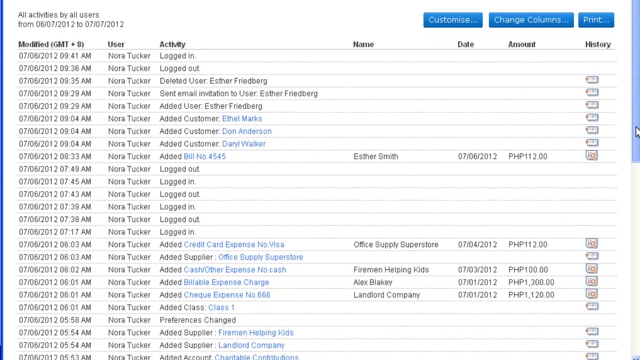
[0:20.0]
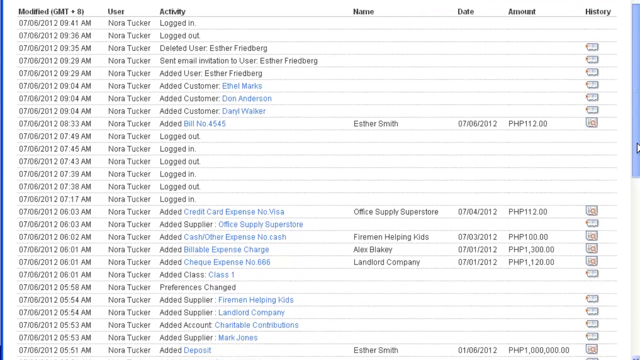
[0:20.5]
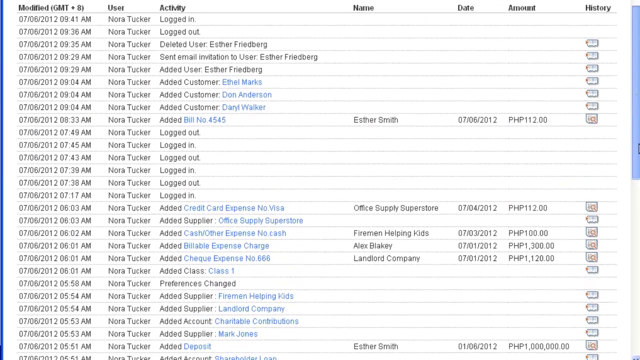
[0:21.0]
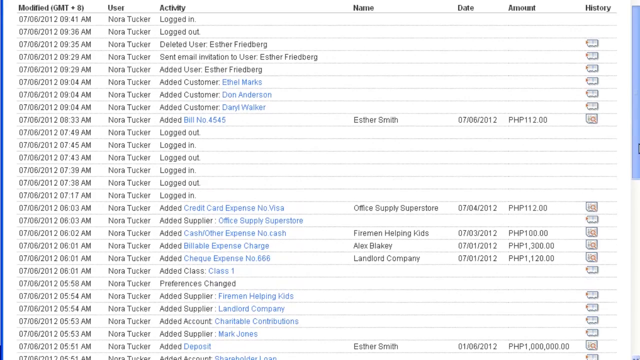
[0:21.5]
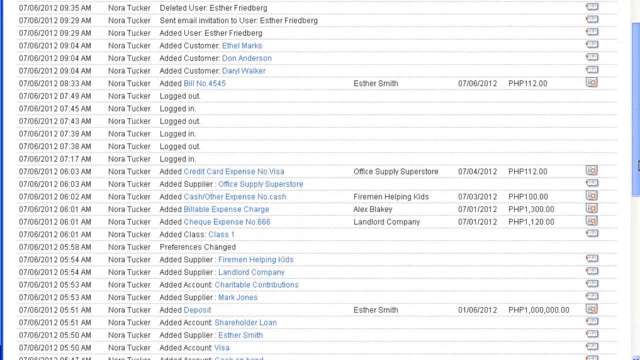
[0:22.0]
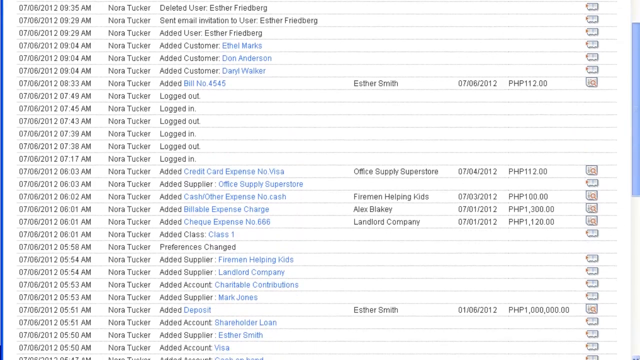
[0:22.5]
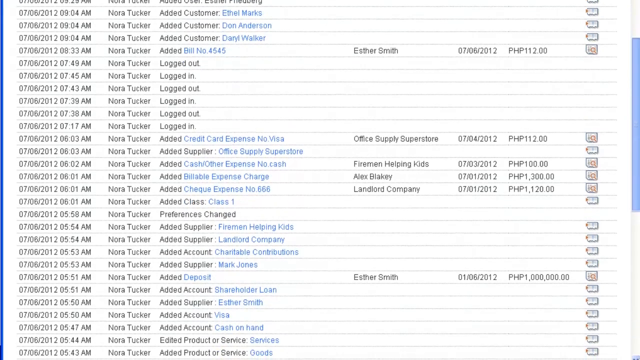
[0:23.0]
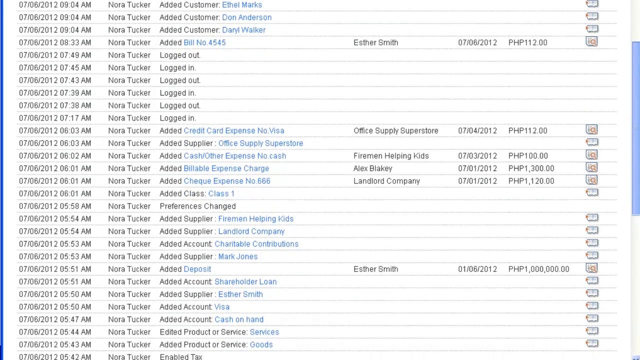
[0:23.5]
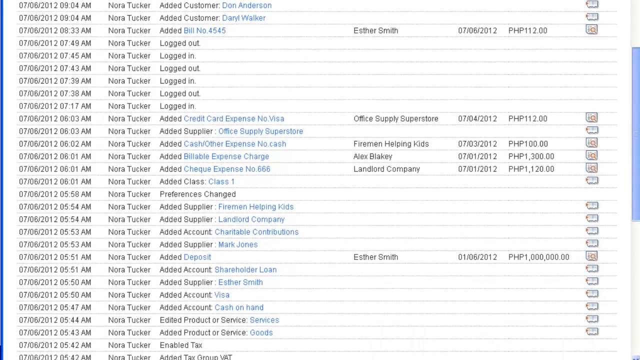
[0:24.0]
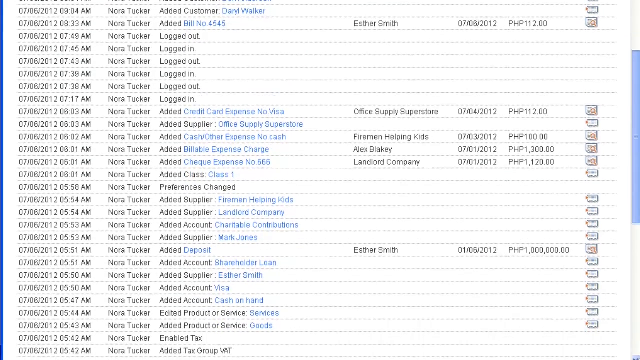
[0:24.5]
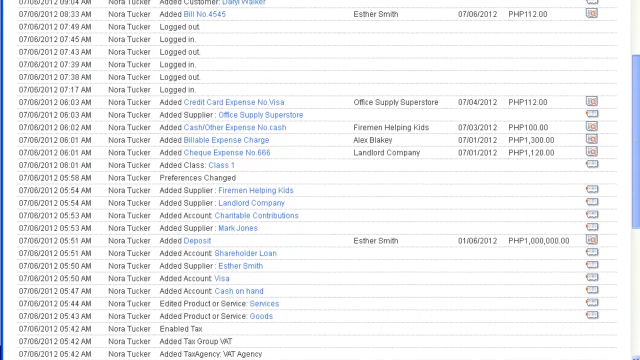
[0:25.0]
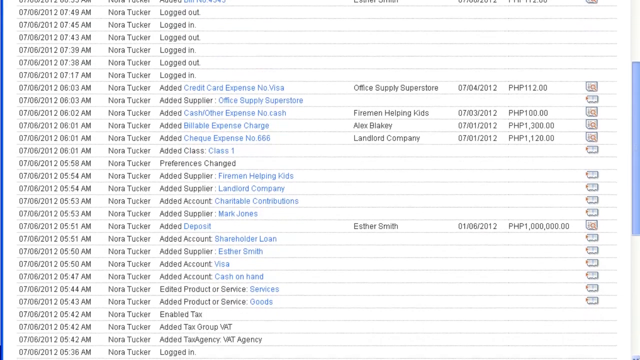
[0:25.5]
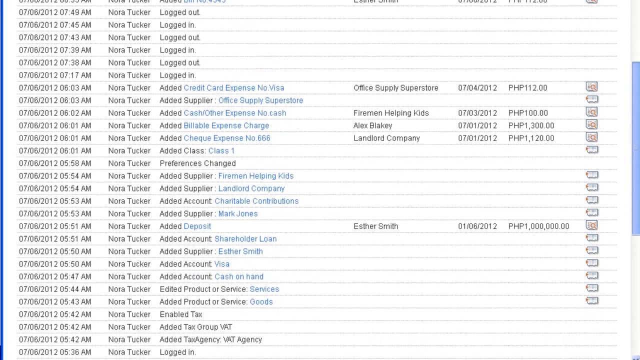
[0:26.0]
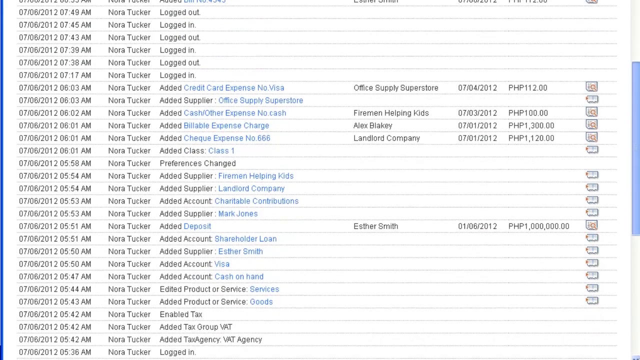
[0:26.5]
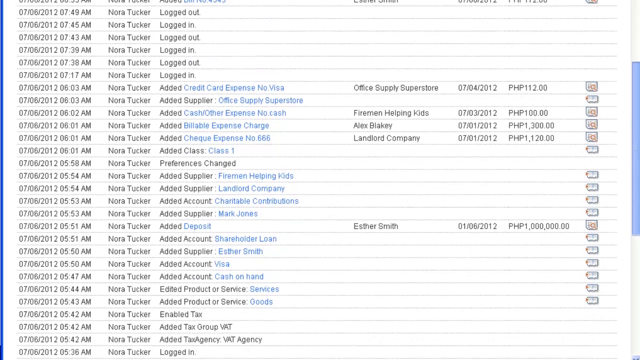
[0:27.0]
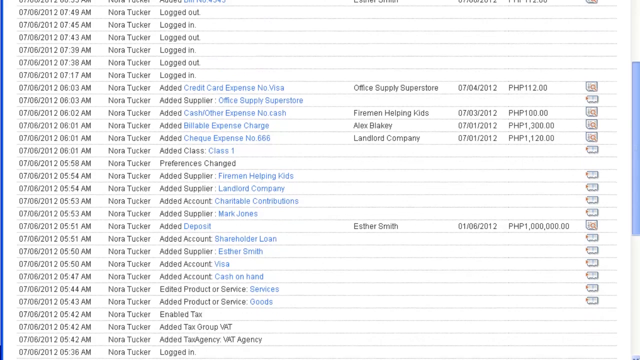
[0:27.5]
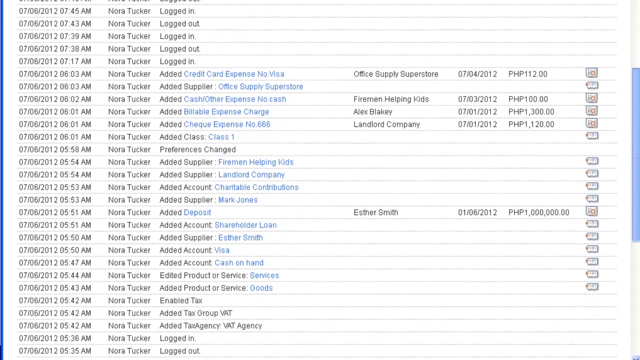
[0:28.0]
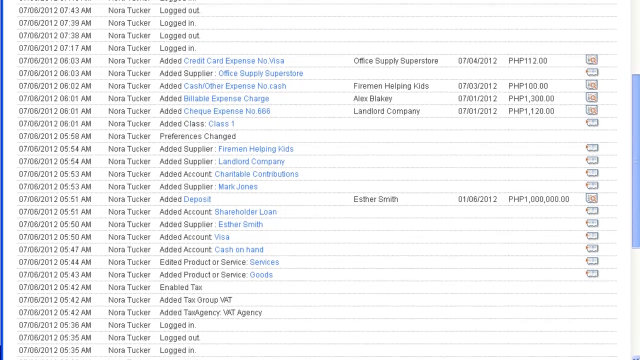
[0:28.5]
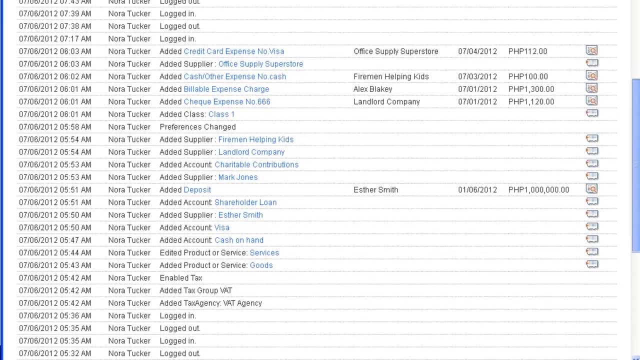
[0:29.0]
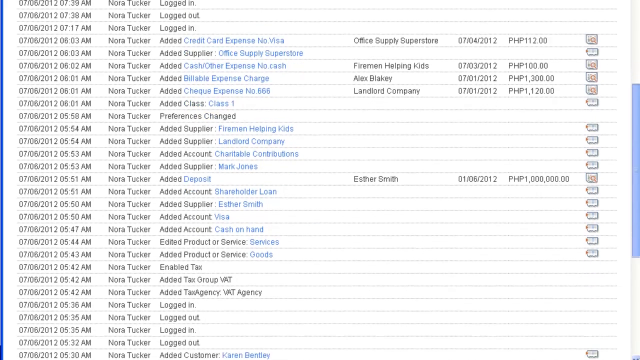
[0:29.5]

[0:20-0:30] The page keeps scrolling down through a list that appears to be sample material rather than real people's information, with the same name, Nora Tucker, repeated. The entries include actions such as "logged in", "logged out", "deleted user", "added customer", "added user", "added credit card expense", "added supplier" and "added cash other expense", along with names, dates and amounts. The list shows the activity a staff member is doing, with times and dates.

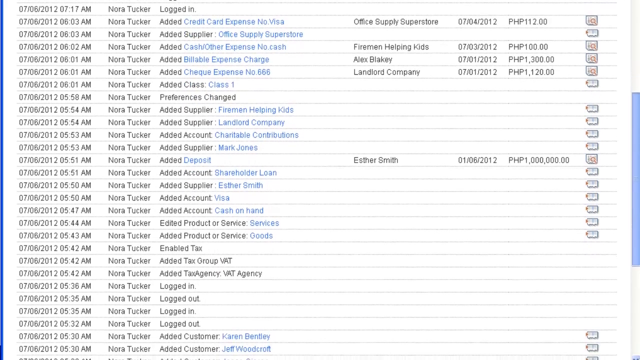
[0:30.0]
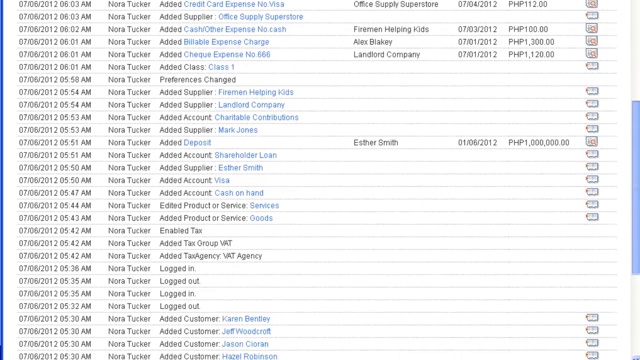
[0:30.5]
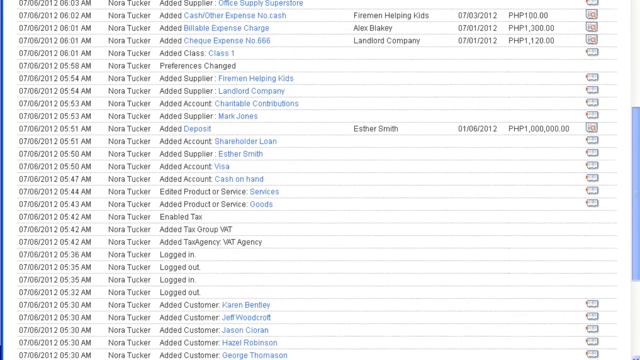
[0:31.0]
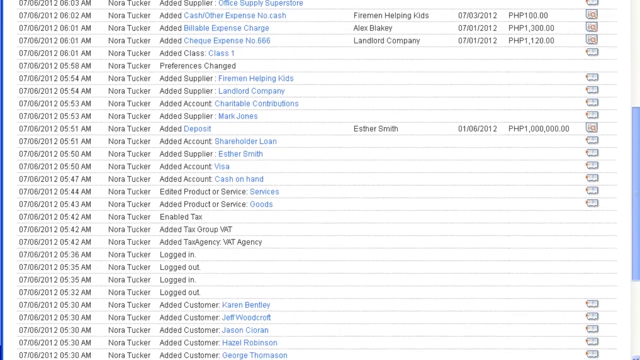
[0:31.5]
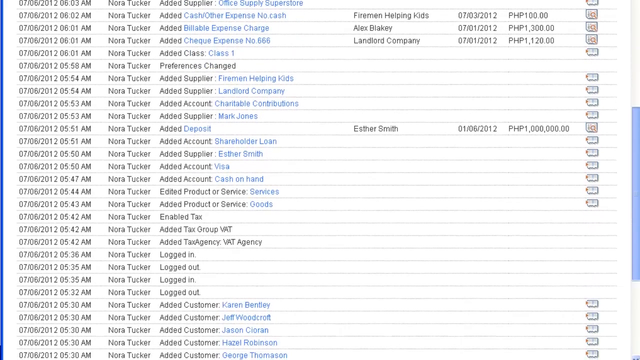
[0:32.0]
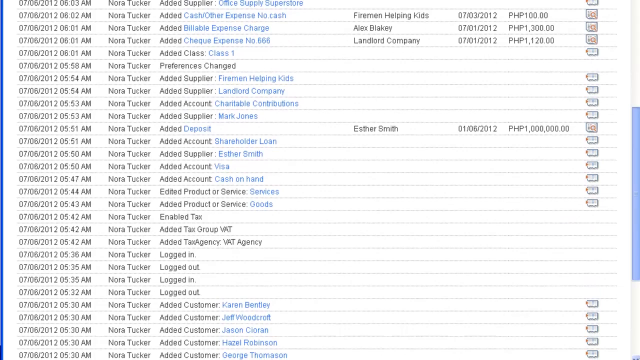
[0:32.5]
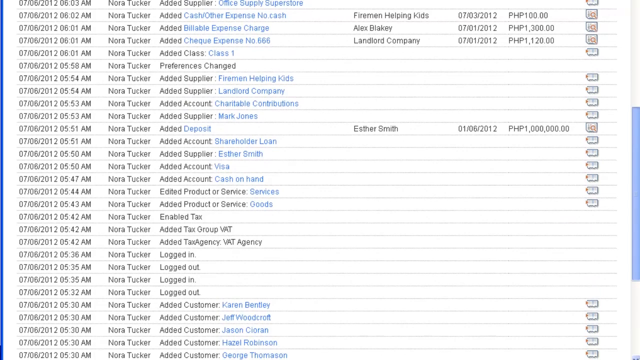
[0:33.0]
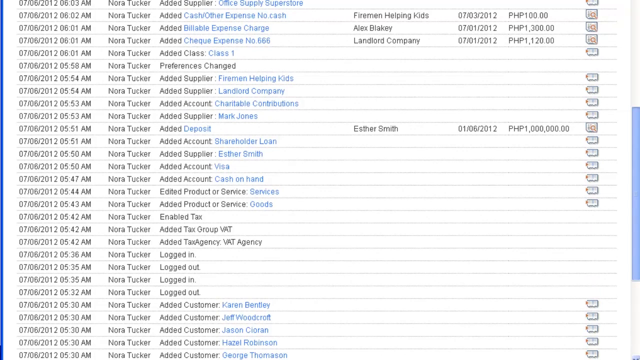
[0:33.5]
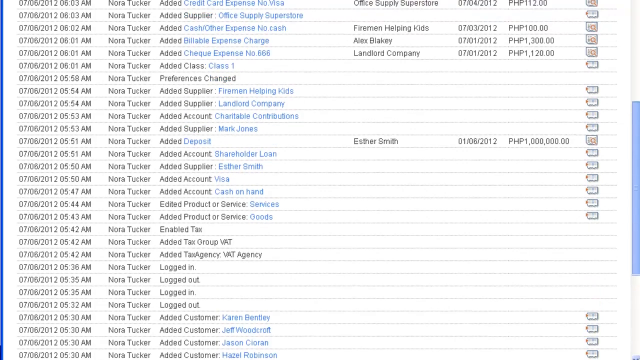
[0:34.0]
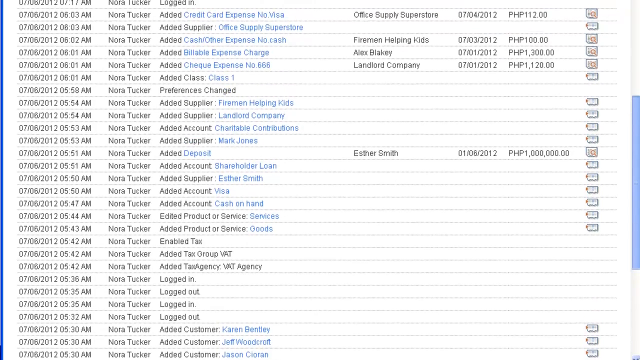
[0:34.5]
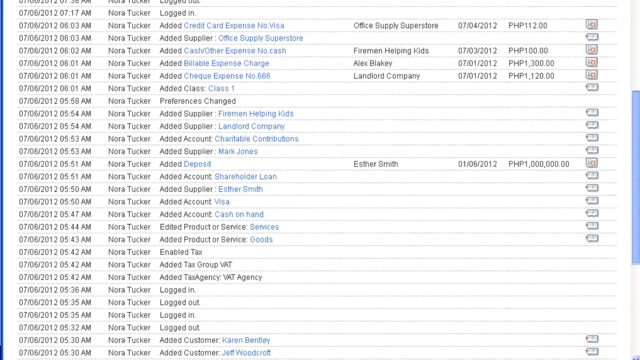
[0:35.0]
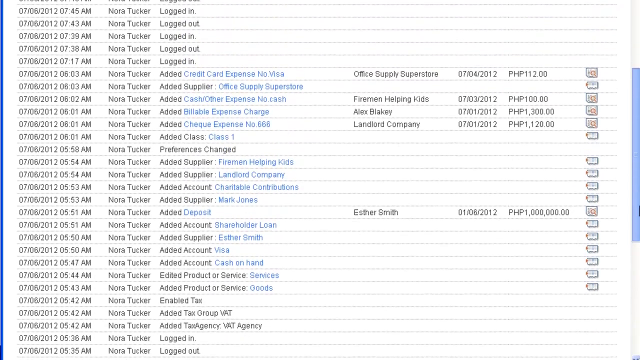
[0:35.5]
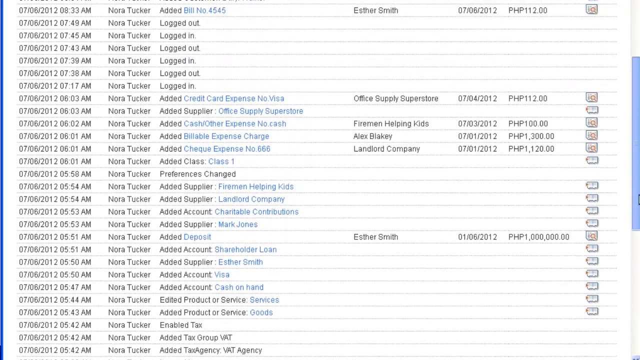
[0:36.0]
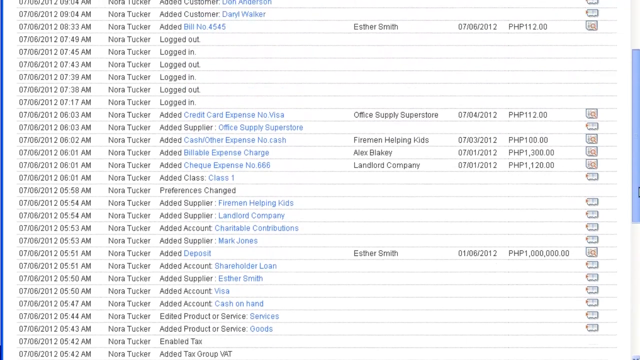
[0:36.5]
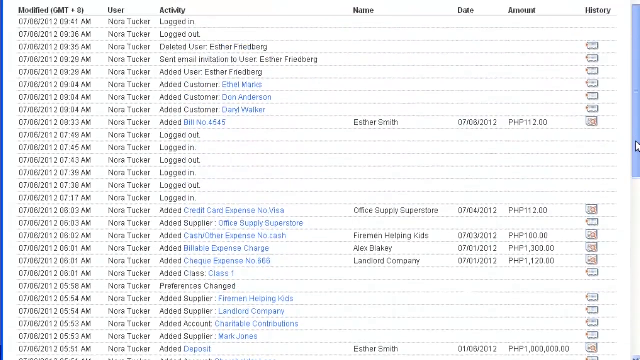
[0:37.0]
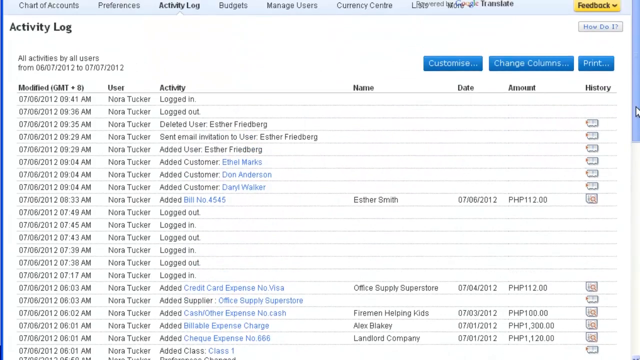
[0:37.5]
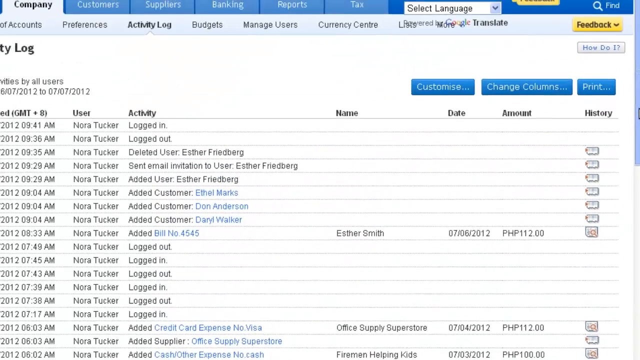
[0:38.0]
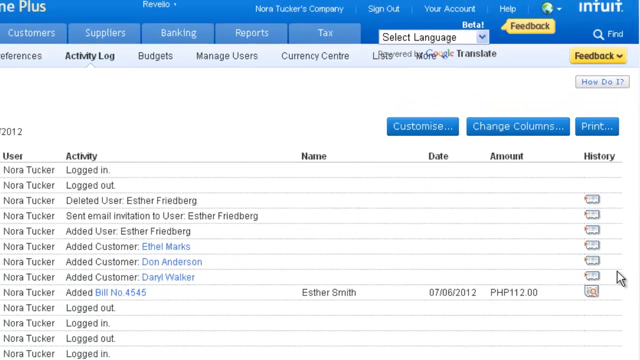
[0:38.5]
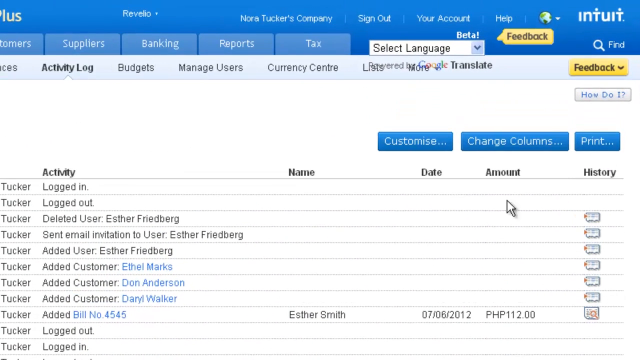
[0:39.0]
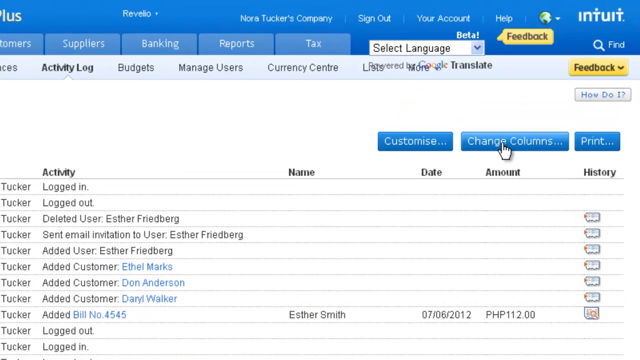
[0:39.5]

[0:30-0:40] The page scrolls down further, and the same name, Nora Turkic, appears throughout, like in a tutorial. The view then zooms up to a button that says "change column", and the cursor is about to click on it when the shot cuts out. It looks like a tutorial on using QuickBooks to track the activities of people who work for a business.